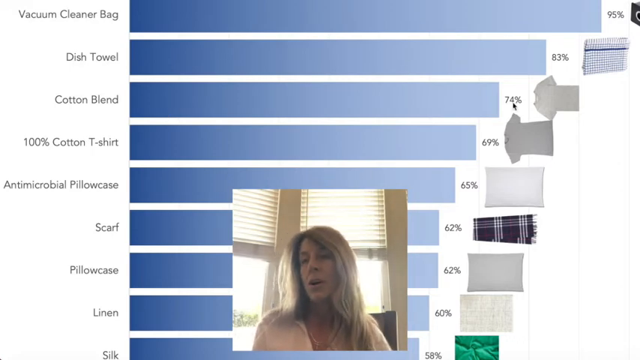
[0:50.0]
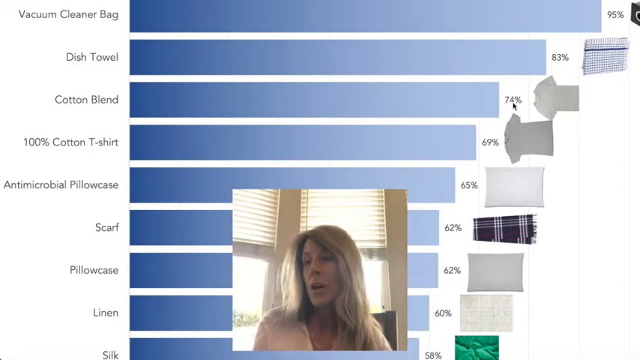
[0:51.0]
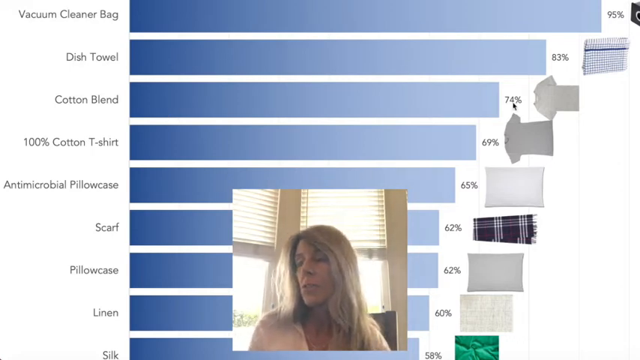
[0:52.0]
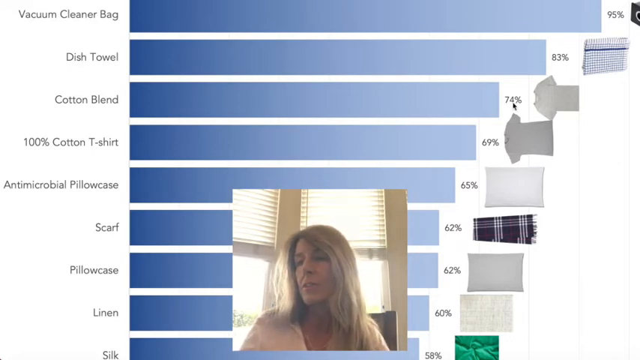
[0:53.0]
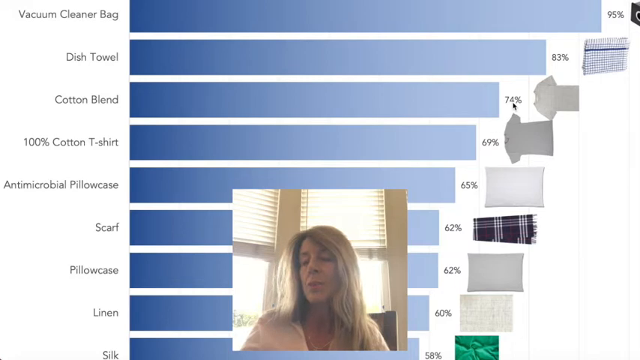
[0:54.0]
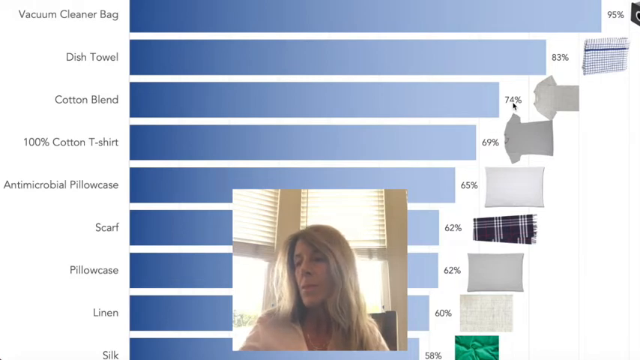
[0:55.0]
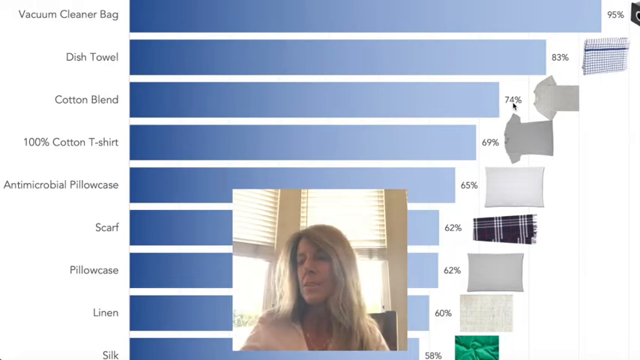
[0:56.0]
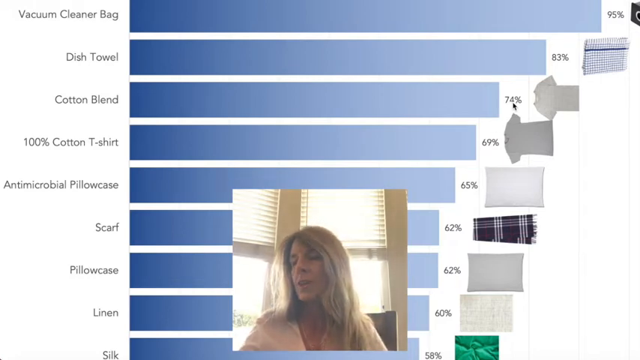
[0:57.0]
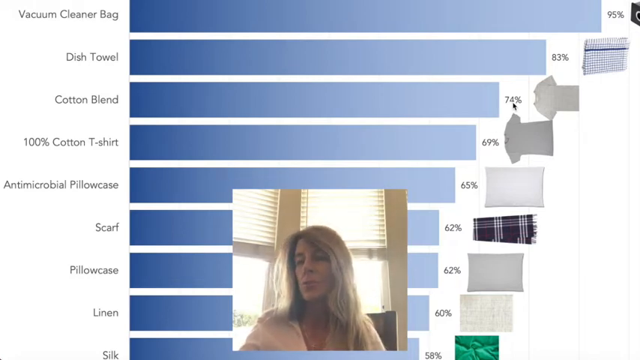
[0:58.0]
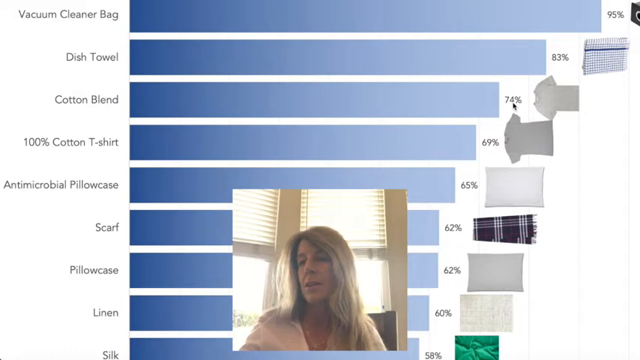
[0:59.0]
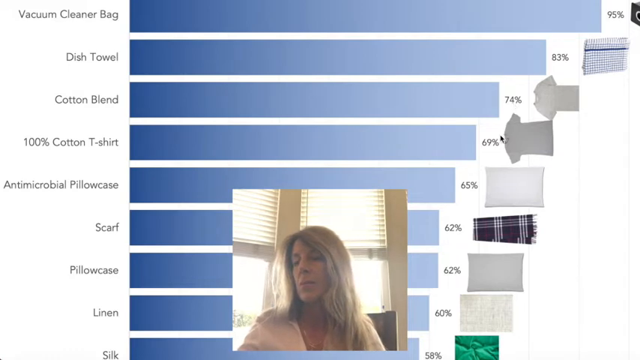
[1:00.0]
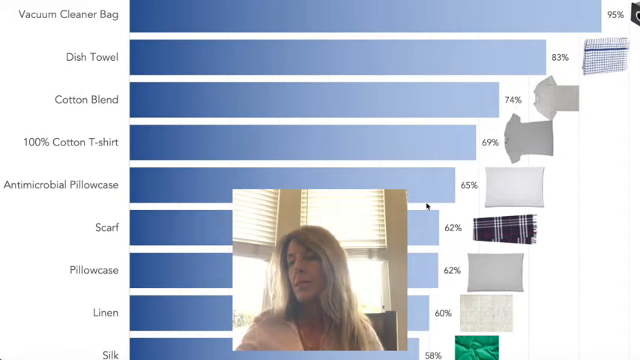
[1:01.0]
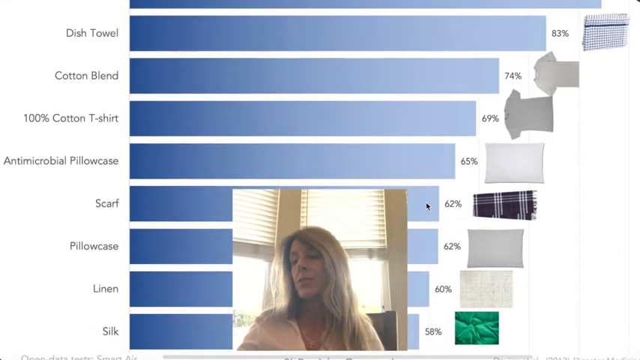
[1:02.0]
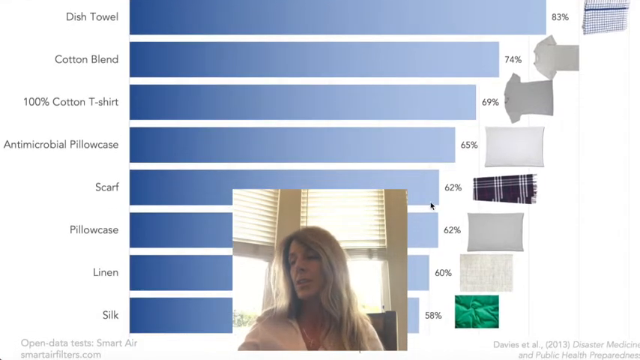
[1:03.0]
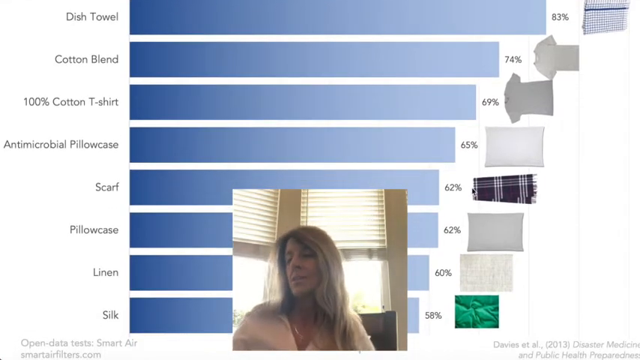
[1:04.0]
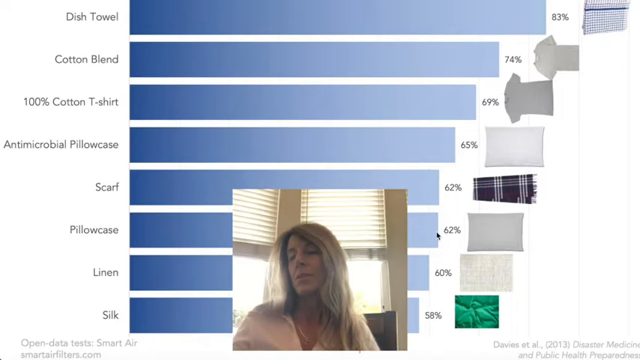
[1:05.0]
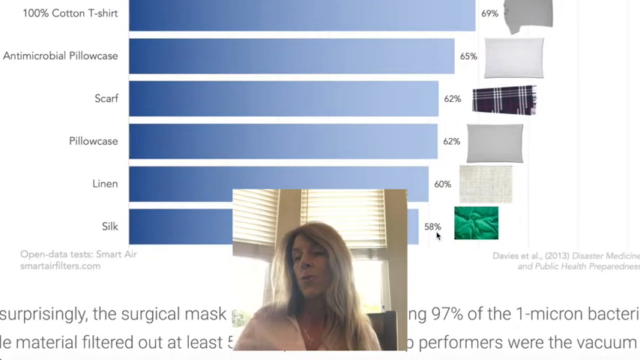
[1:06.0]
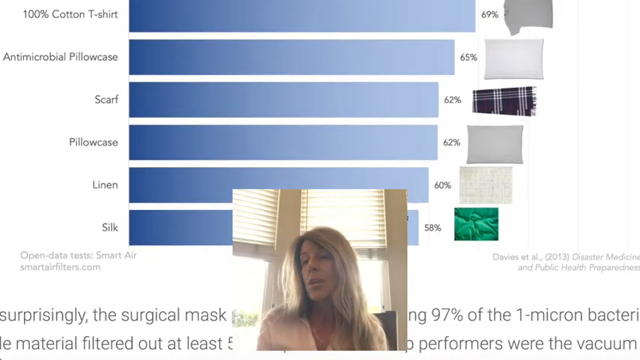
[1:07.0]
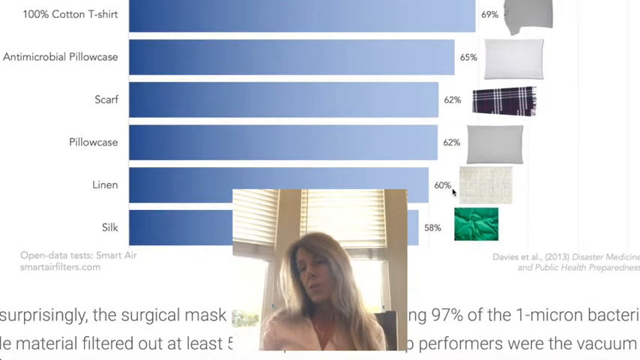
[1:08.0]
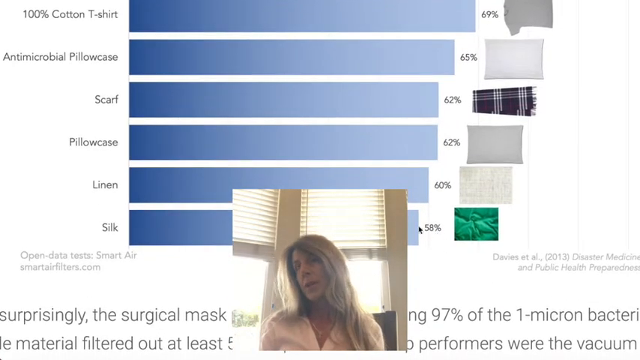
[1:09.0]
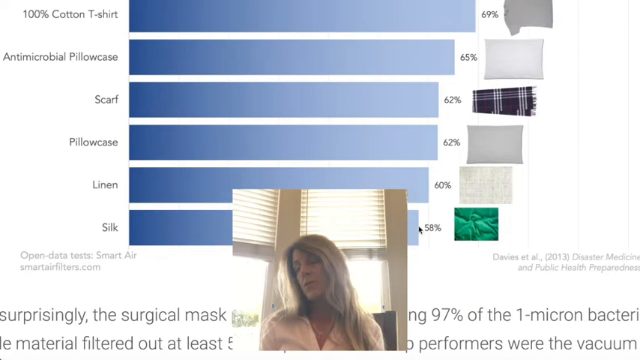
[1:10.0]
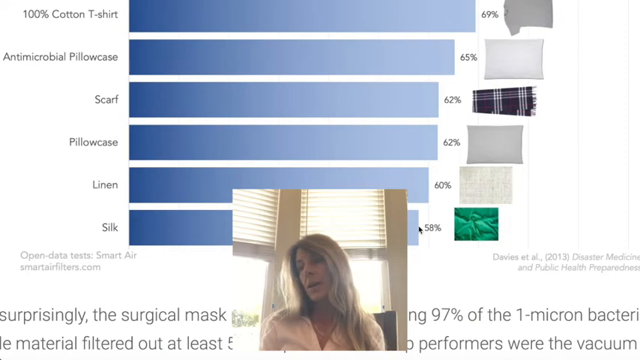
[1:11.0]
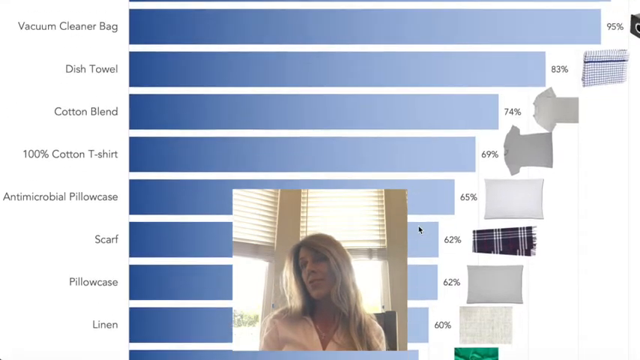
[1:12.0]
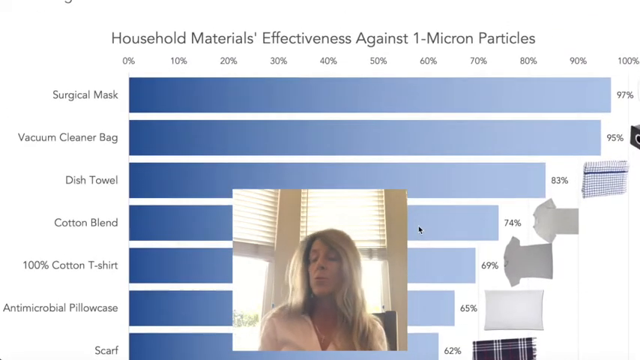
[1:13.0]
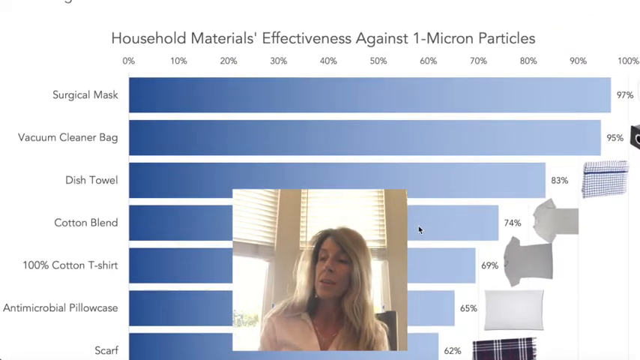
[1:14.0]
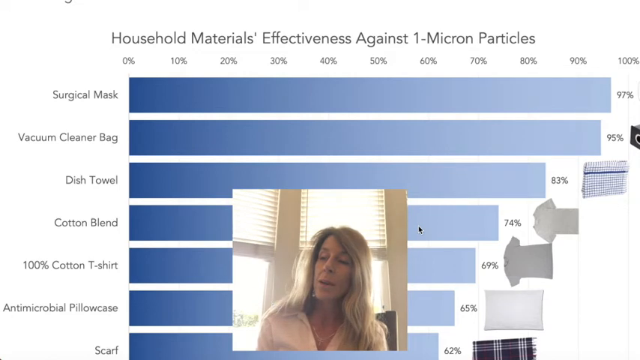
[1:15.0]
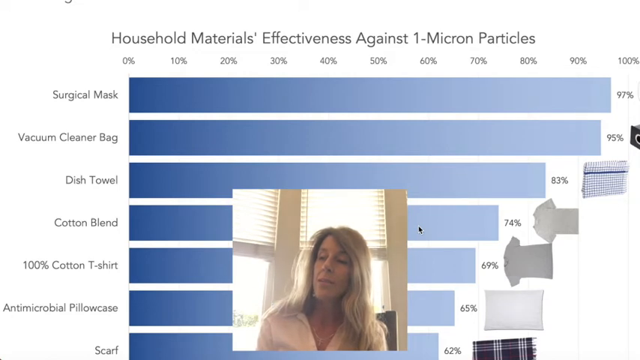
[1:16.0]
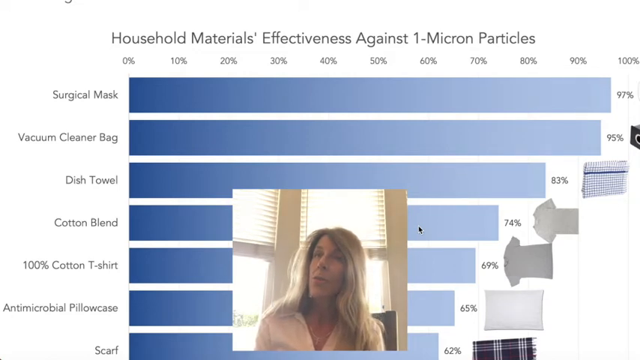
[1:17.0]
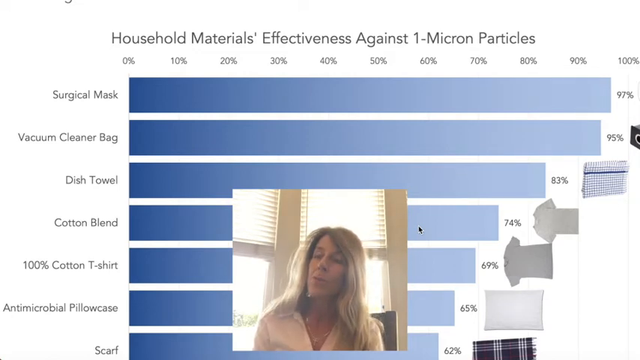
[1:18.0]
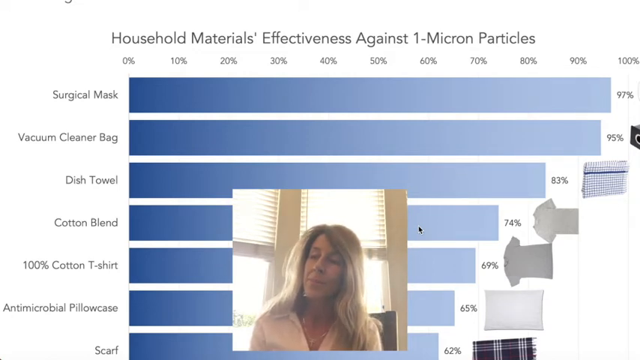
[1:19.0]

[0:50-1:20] The bar graph stays in the background, with the video of the woman facing the viewer in the foreground. The cursor has been dragged to hover below the percentage for the Cotton Blend bar. The woman speaks and looks to the left before dragging the cursor down to hover below the percentage for the Antimicrobial Pillowcase bar. The page scrolls down, and the cursor is dragged right and then up to hover to the right of the percentage for the Scarf bar. The page scrolls down again and the cursor moves down and left to hover under the percentage for the Silk bar. The cursor is moved left and up to hover over the Linen percentage, then back to hover over the Silk bar. The woman scrolls up until the cursor hovers on the right side of the Cotton Blend bar. The video fades to black and white text falls toward the middle, reading "How To Build A Face Mask."